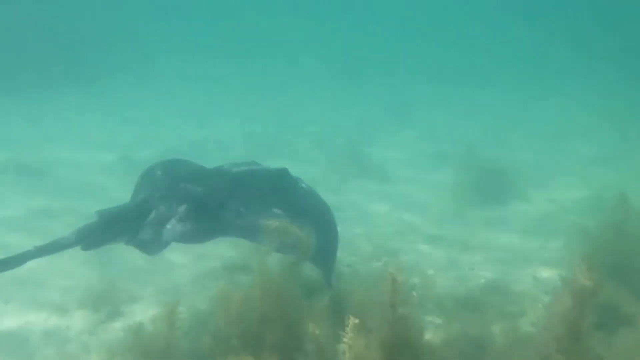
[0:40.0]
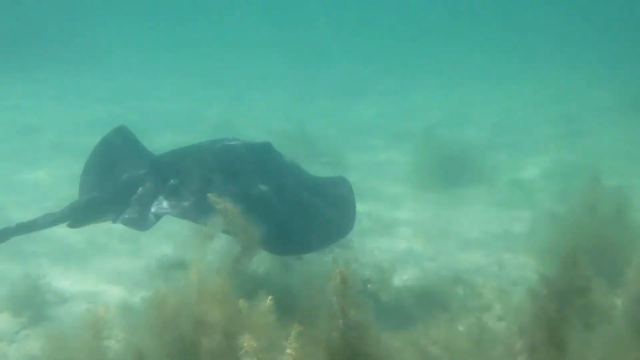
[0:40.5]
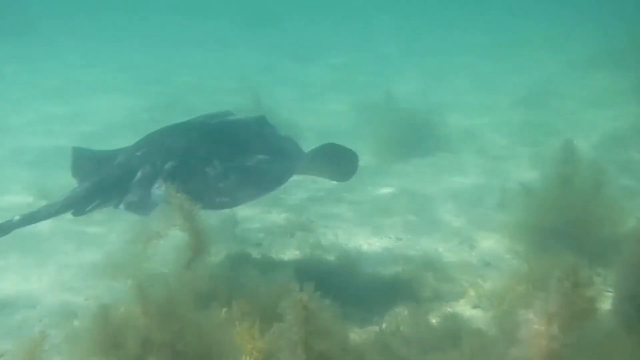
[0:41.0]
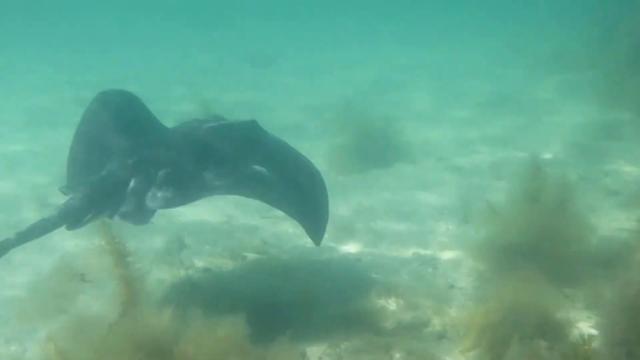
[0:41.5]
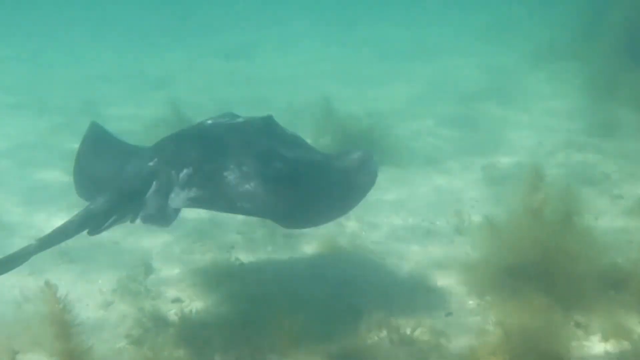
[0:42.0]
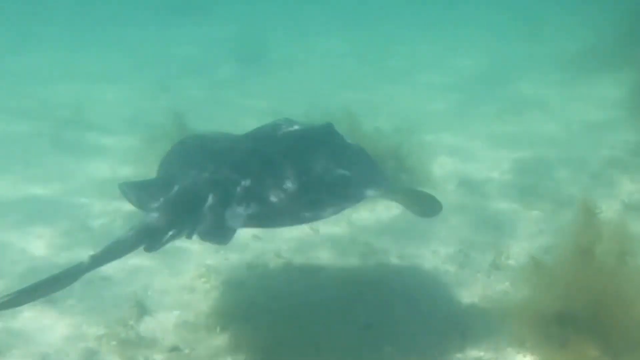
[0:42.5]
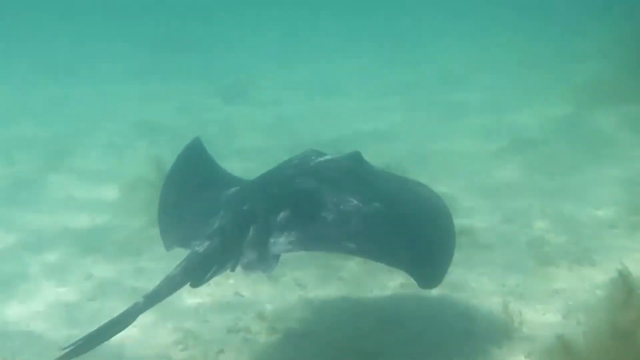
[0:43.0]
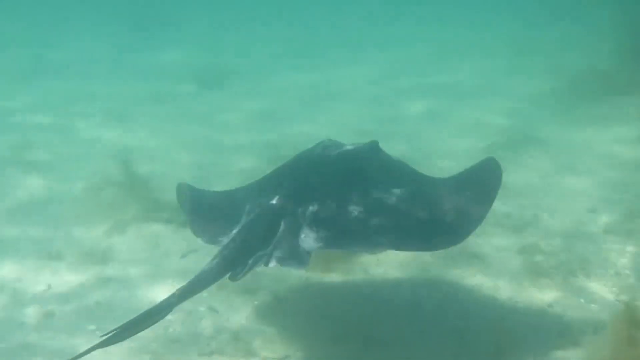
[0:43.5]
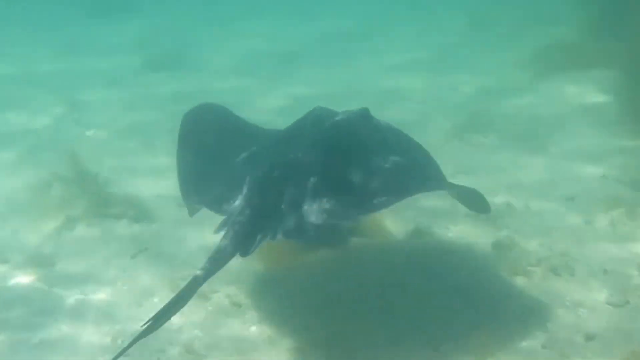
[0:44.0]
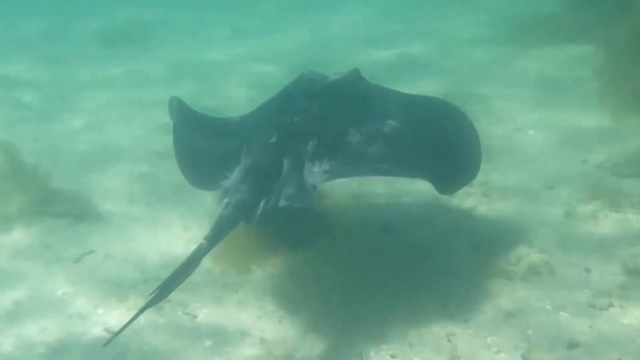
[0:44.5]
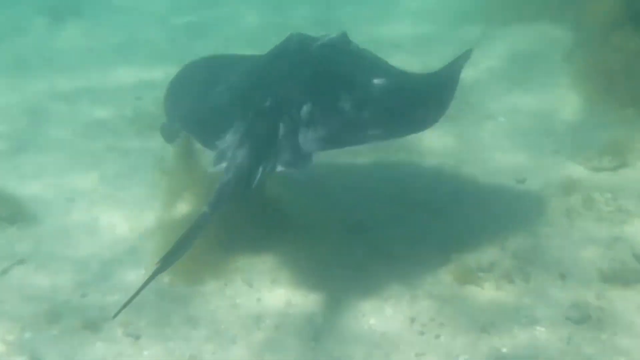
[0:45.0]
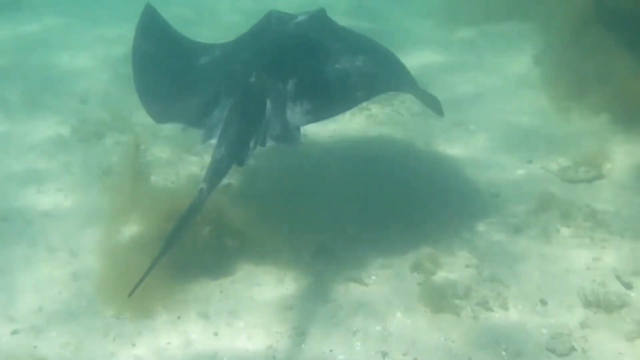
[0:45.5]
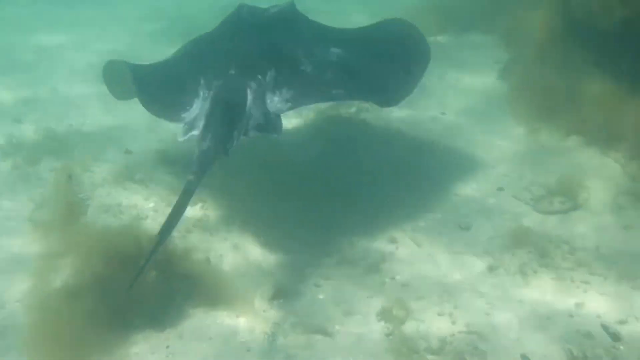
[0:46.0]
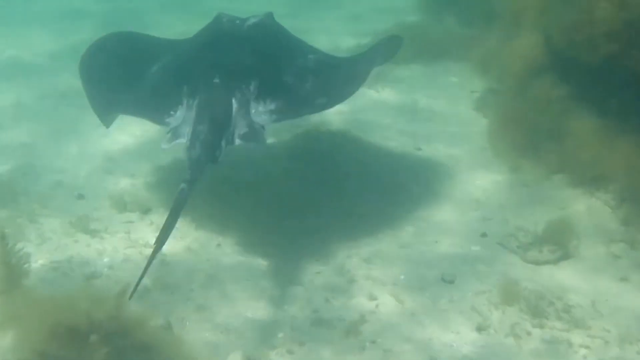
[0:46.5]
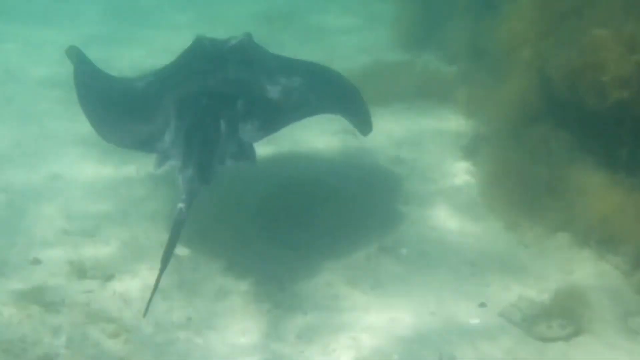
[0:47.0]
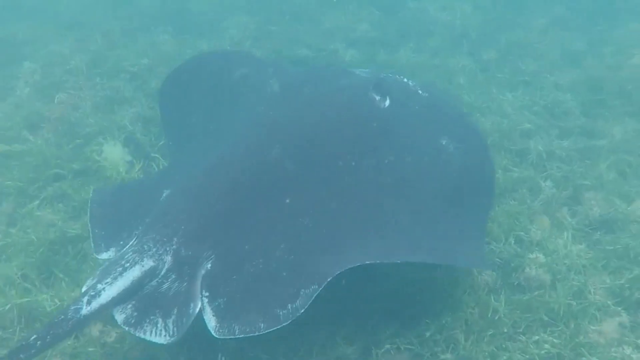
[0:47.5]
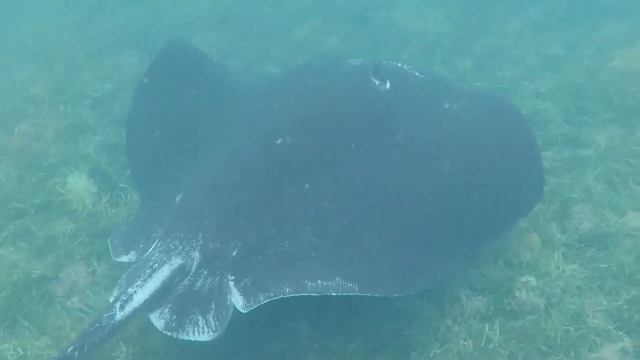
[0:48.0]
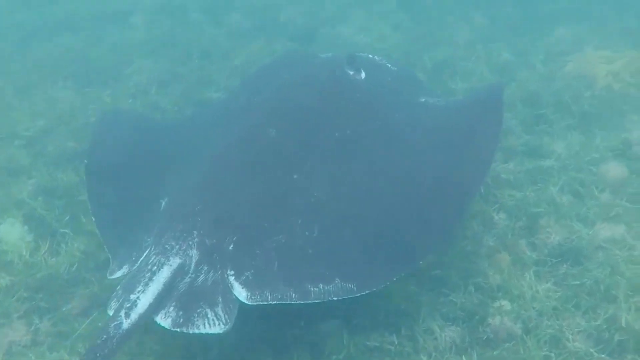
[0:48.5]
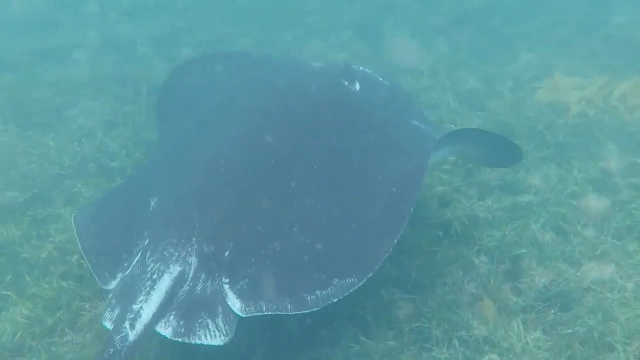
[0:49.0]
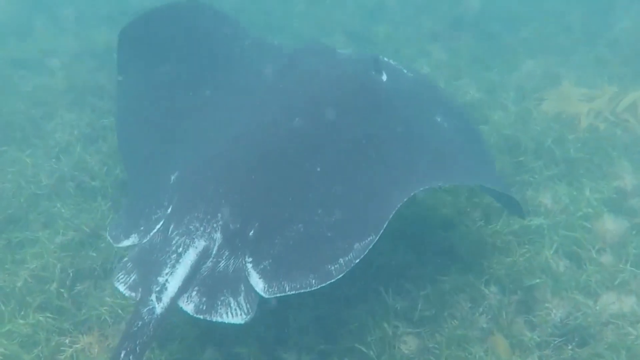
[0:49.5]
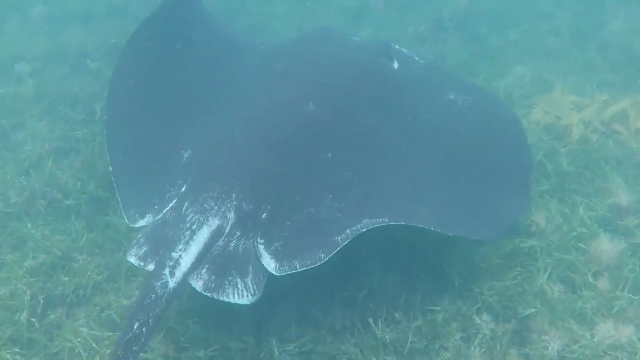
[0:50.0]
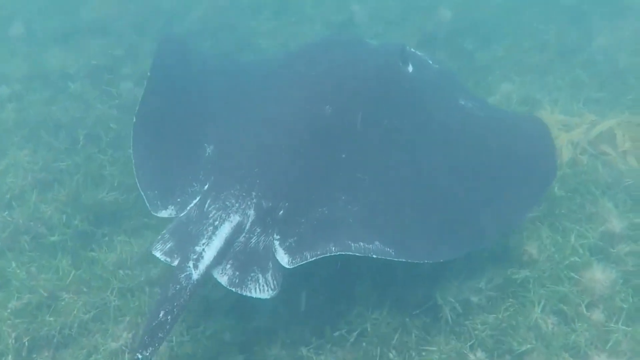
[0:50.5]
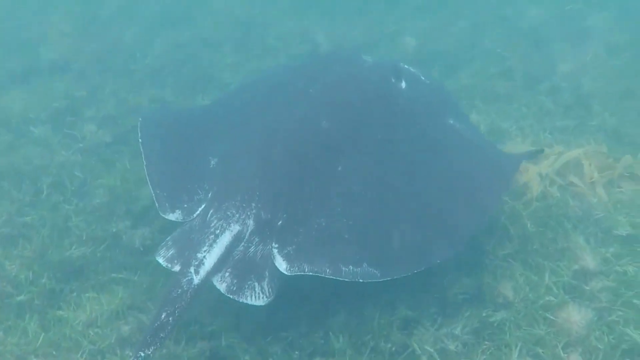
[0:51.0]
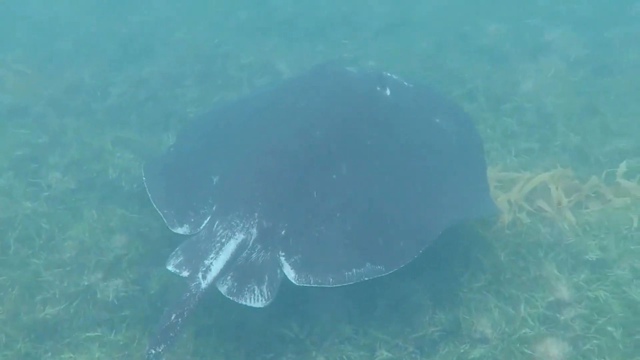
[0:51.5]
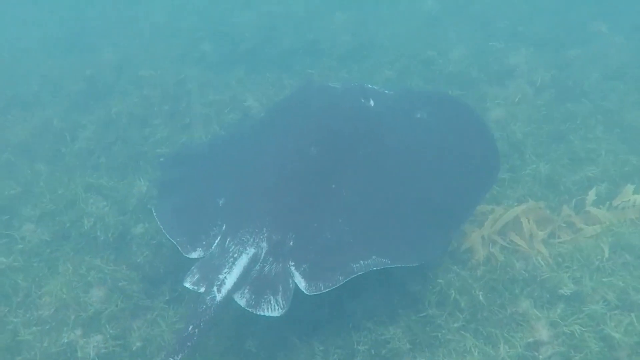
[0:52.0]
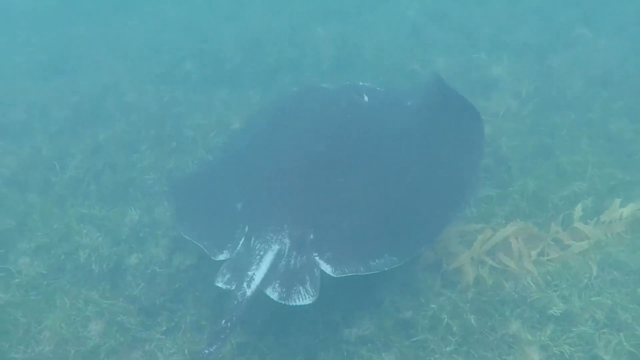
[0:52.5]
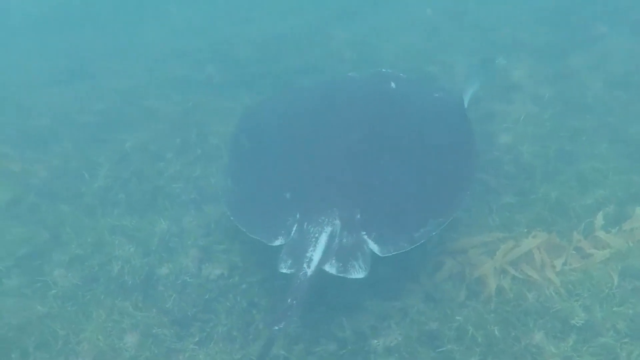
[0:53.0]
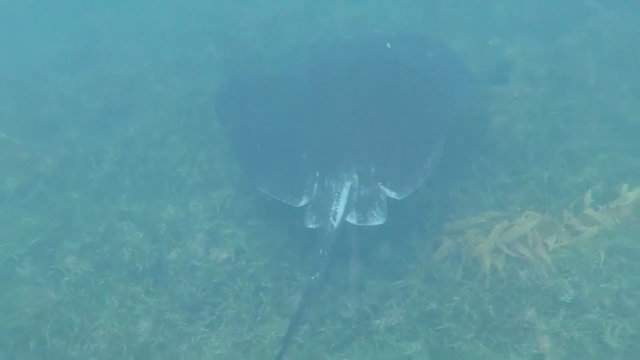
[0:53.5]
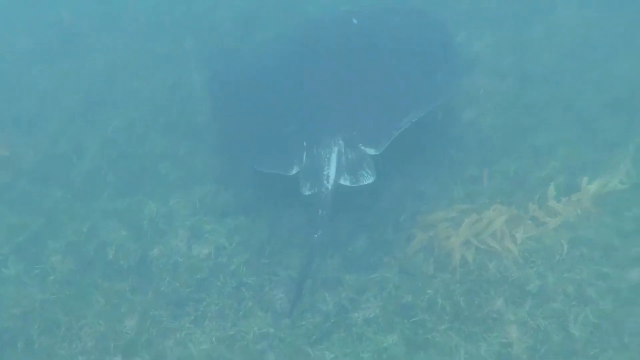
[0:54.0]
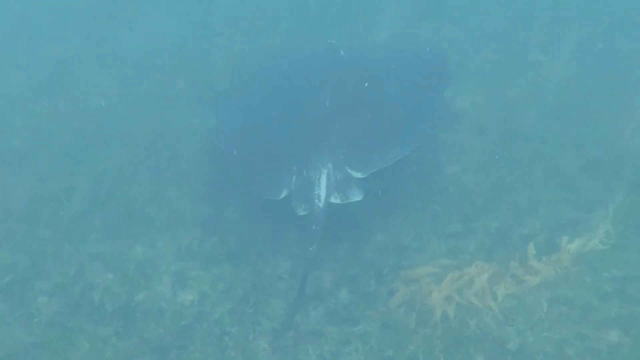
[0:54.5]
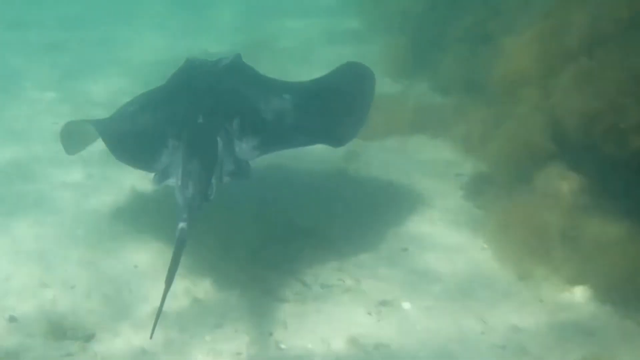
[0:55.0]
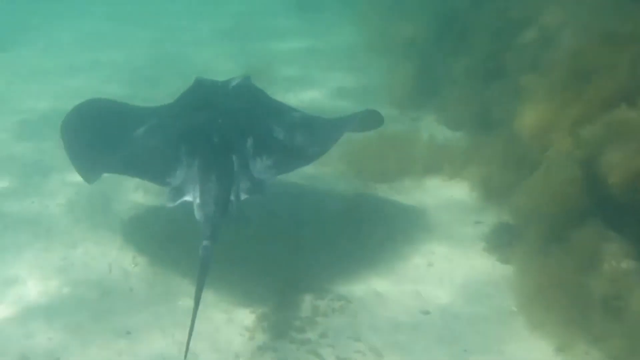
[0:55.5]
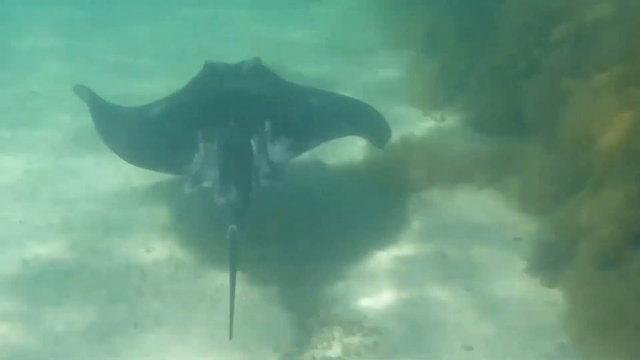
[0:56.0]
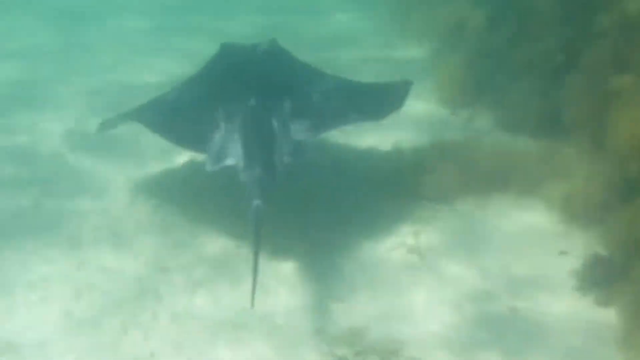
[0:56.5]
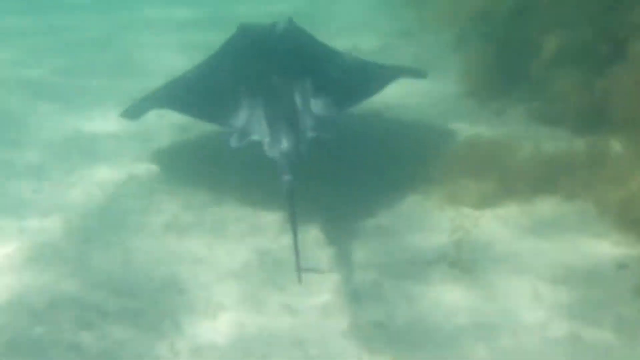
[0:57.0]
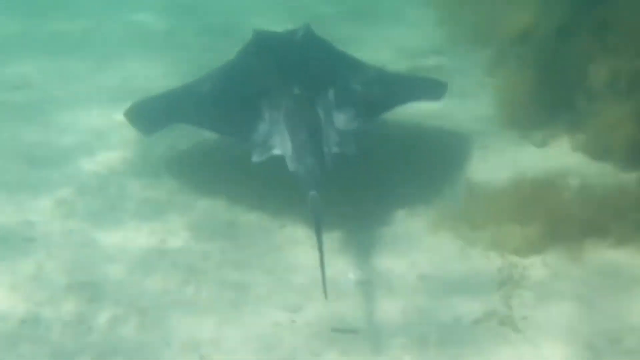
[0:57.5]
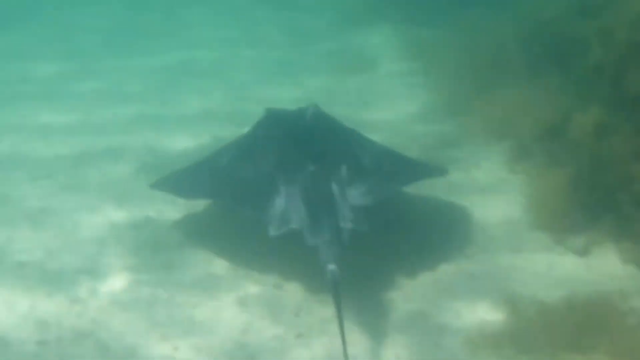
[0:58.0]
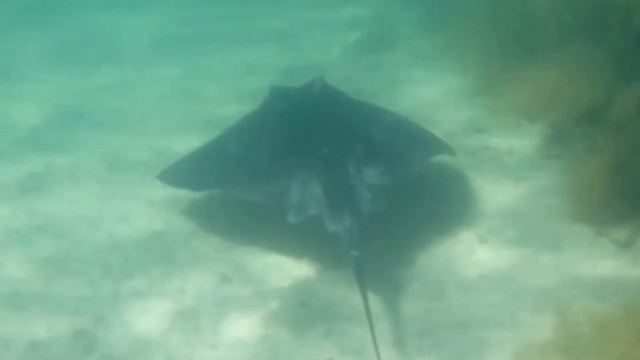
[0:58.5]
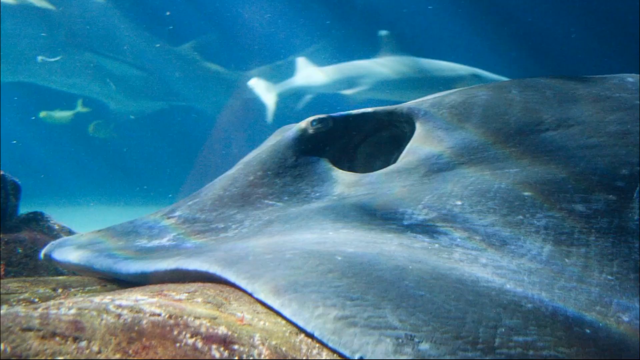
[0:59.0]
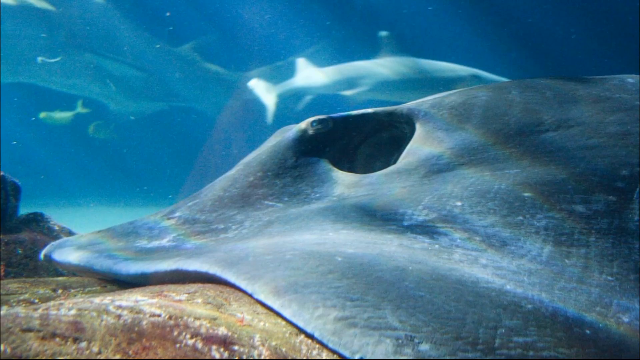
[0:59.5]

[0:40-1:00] A stingray swims in transparent green ocean water. There is not much on the sea bottom: some seaweed here and there, but the floor is mostly clear. The stingray is very wavy and has a long tail, about the size of its torso and main body. It is dark gray, and as it swims it moves its flaps, which are very wavy. The stingray travels by itself as it swims forward, with some seaweed to the side. Lastly, a picture shows an up-close view of a stingray with a hole near its eye area. In this picture the stingray is light gray, with the reflection of lights on its body, and sharks, whales and several kinds of fish swim in the background.